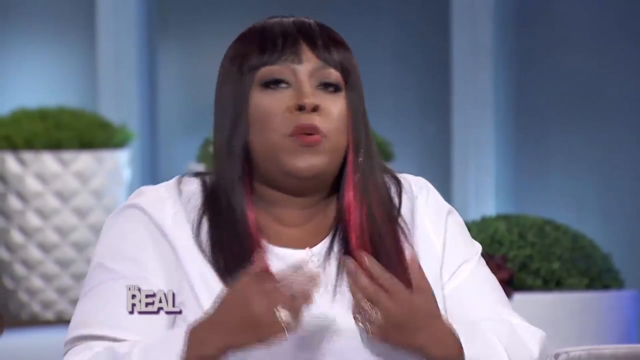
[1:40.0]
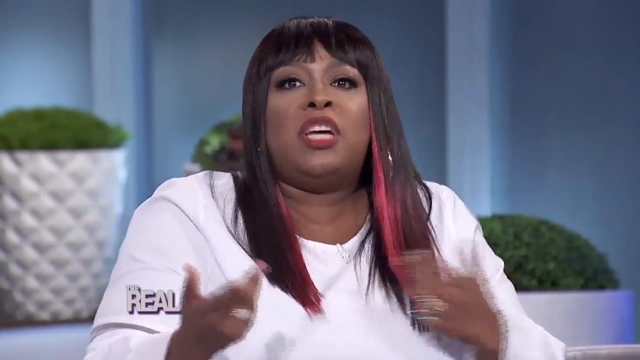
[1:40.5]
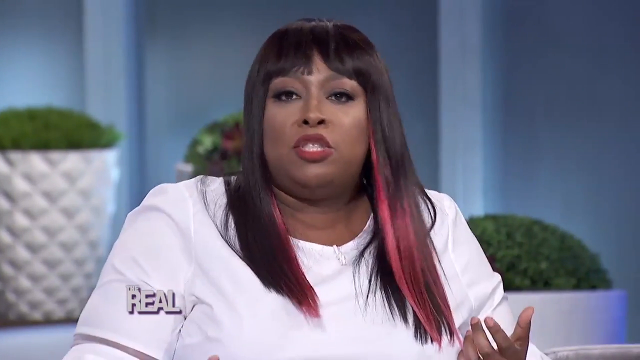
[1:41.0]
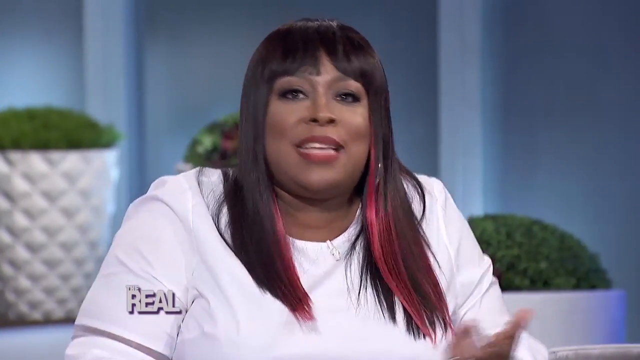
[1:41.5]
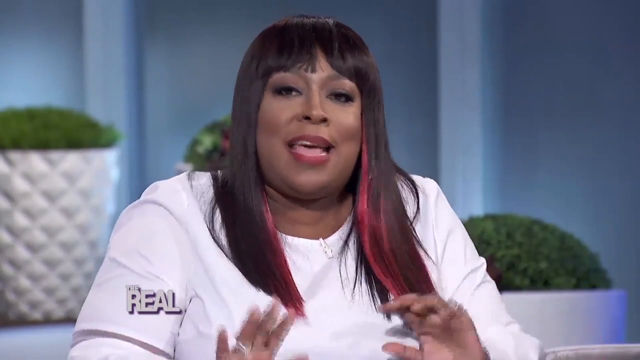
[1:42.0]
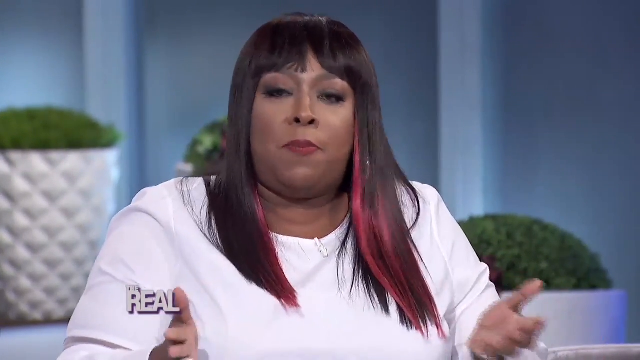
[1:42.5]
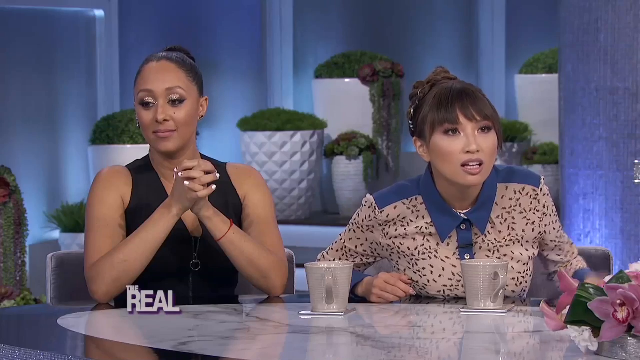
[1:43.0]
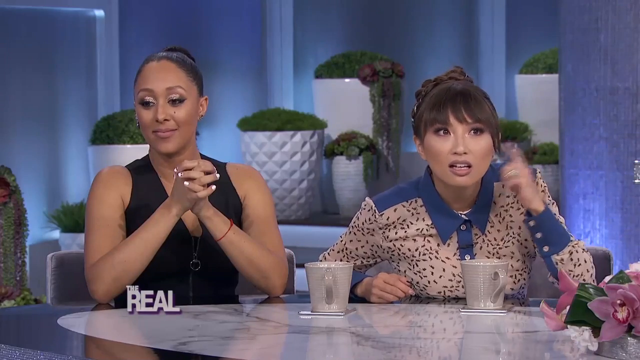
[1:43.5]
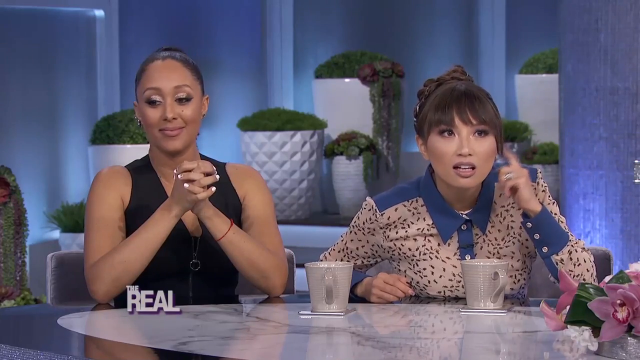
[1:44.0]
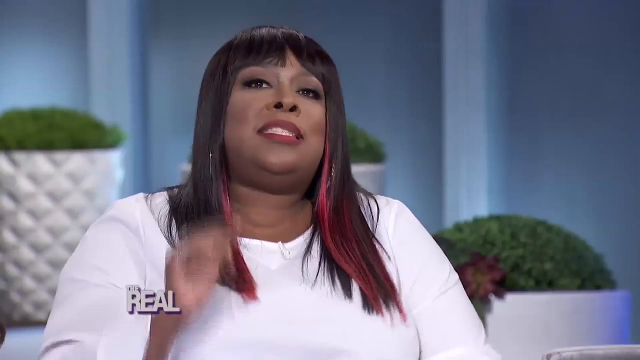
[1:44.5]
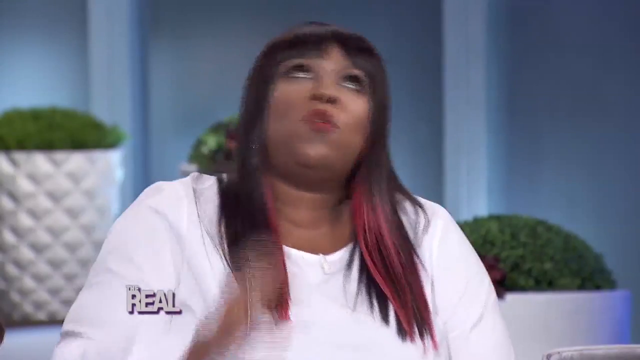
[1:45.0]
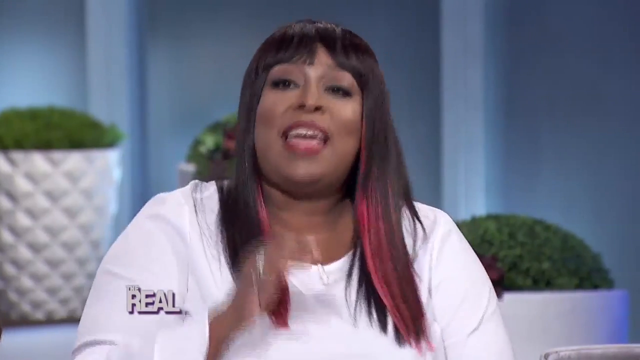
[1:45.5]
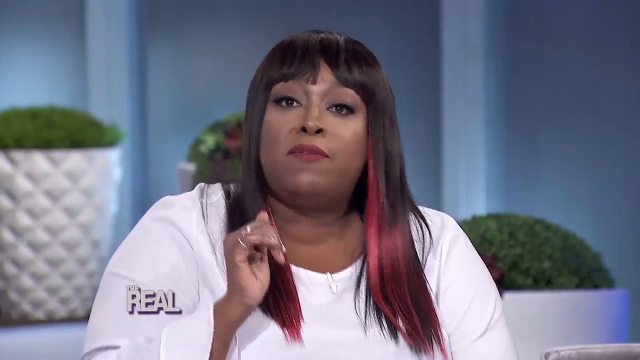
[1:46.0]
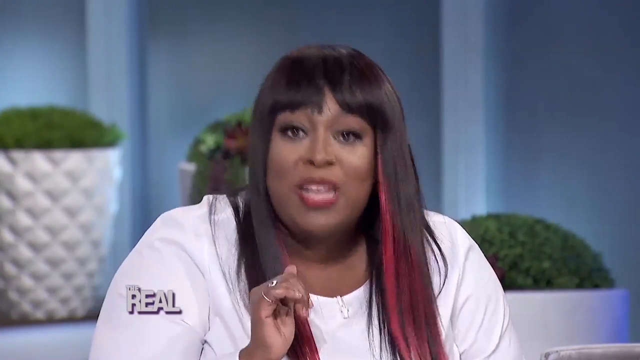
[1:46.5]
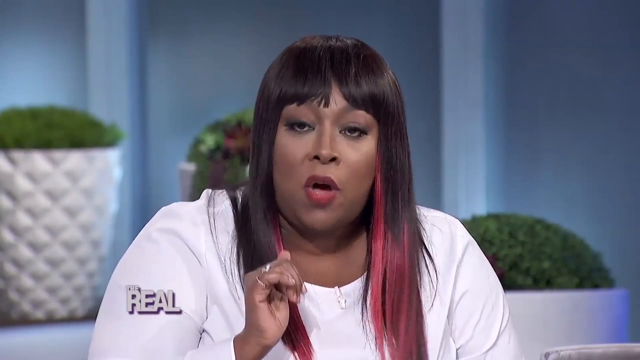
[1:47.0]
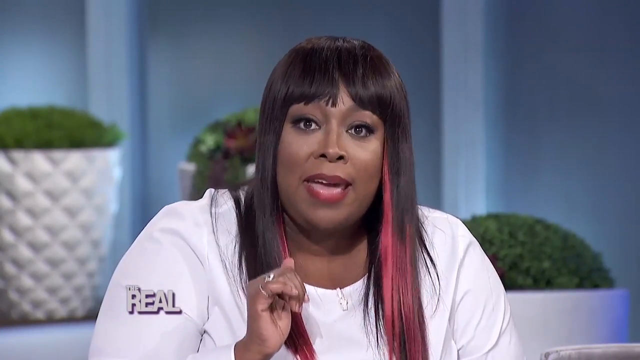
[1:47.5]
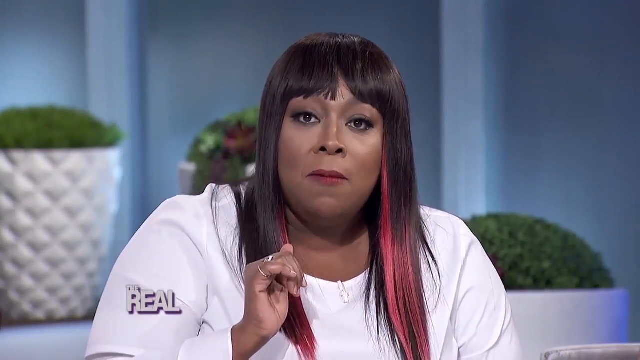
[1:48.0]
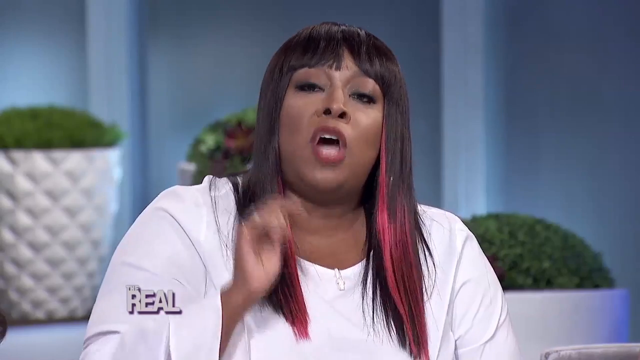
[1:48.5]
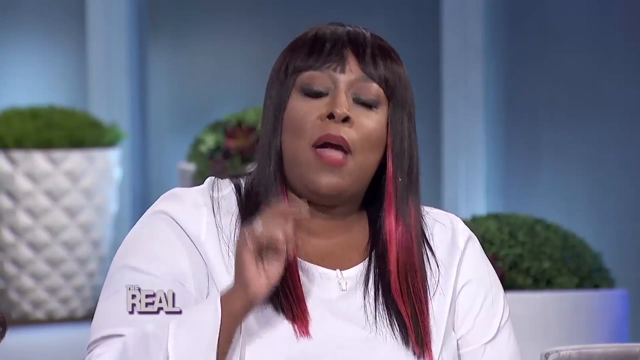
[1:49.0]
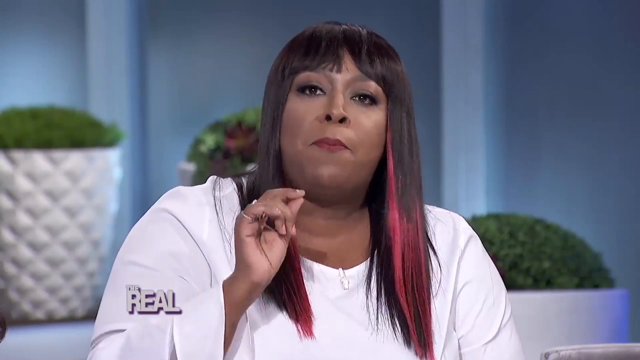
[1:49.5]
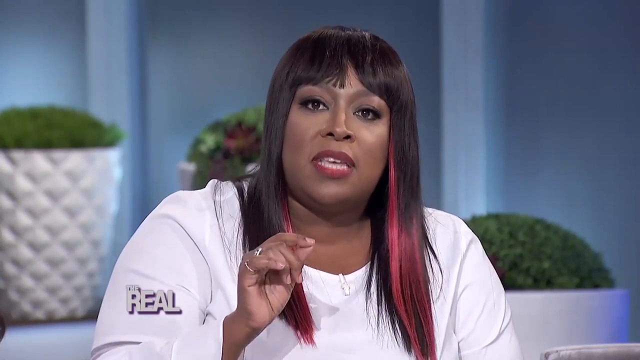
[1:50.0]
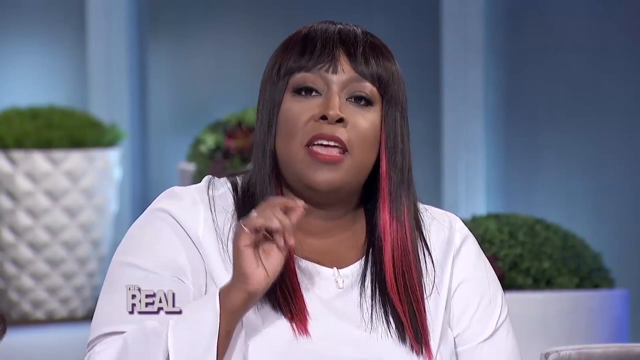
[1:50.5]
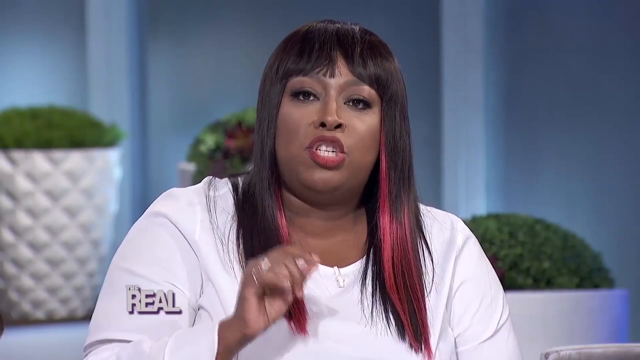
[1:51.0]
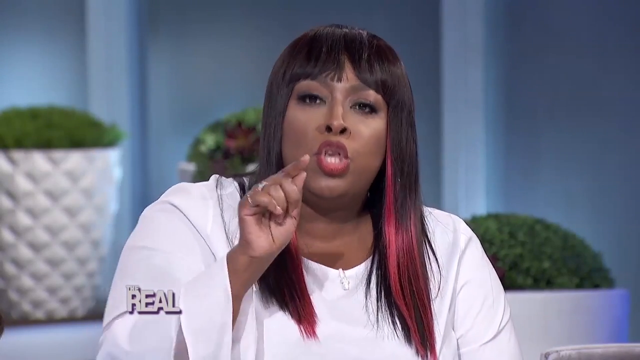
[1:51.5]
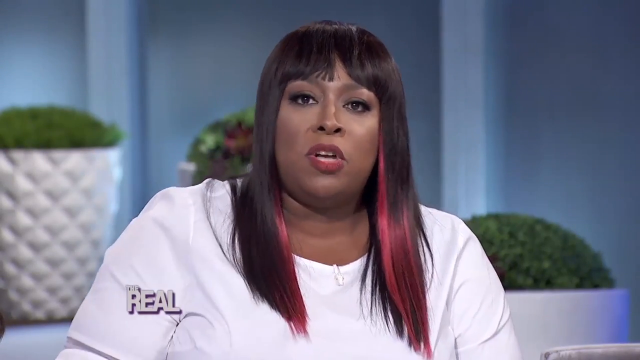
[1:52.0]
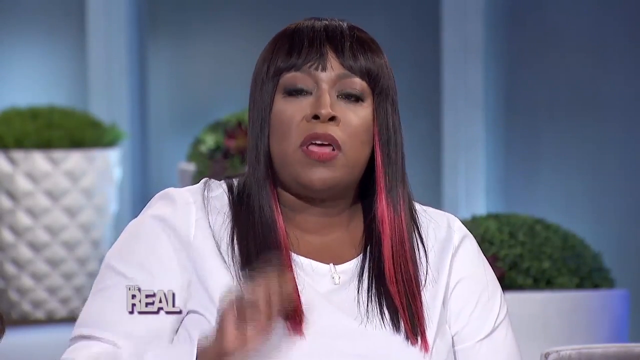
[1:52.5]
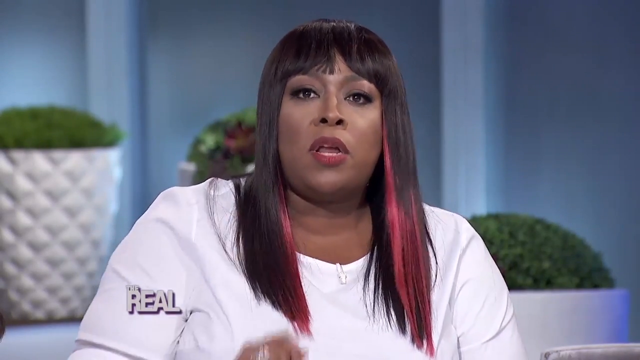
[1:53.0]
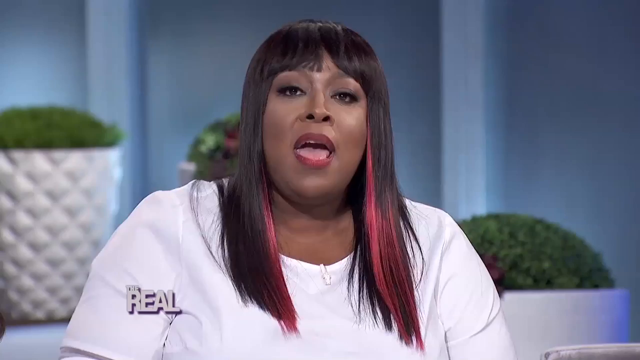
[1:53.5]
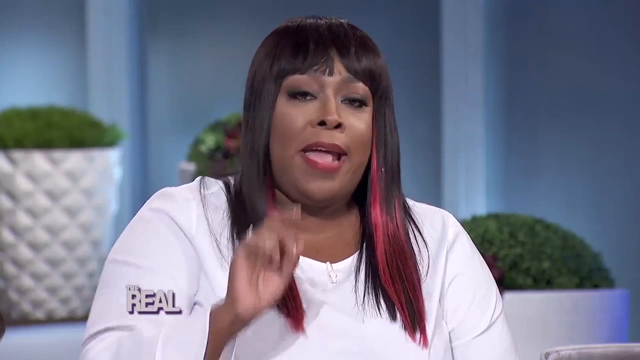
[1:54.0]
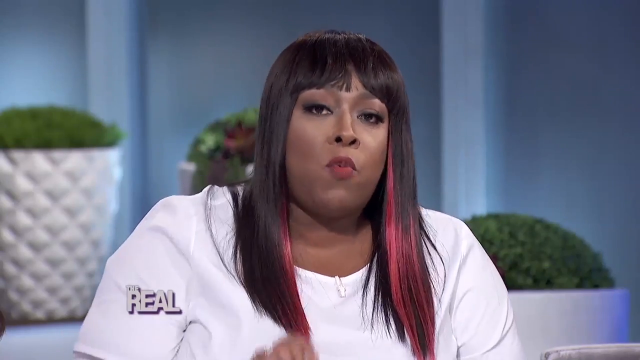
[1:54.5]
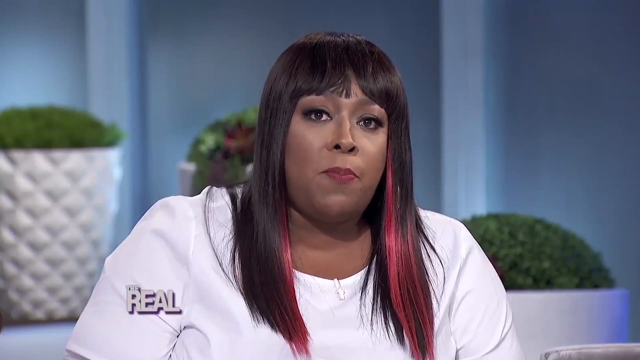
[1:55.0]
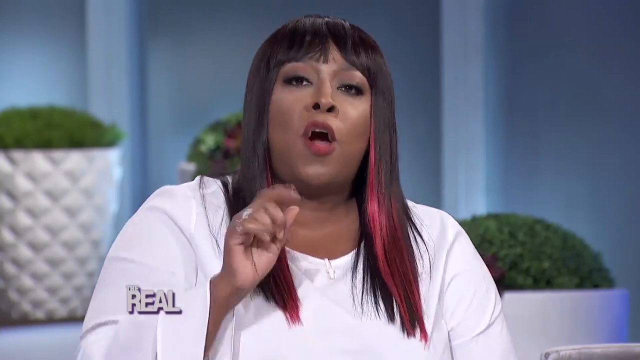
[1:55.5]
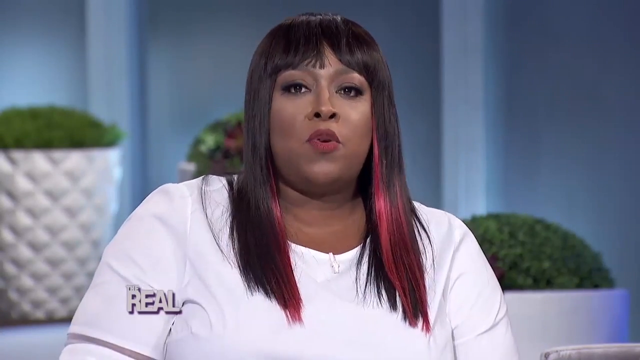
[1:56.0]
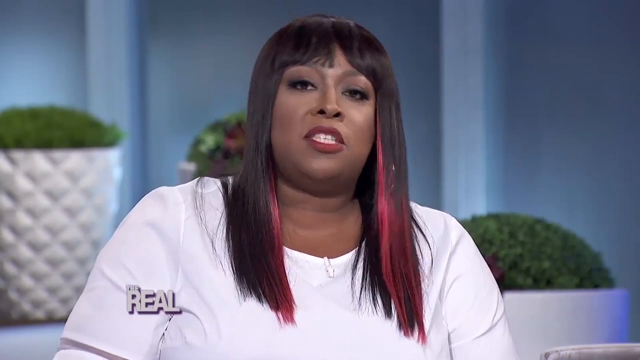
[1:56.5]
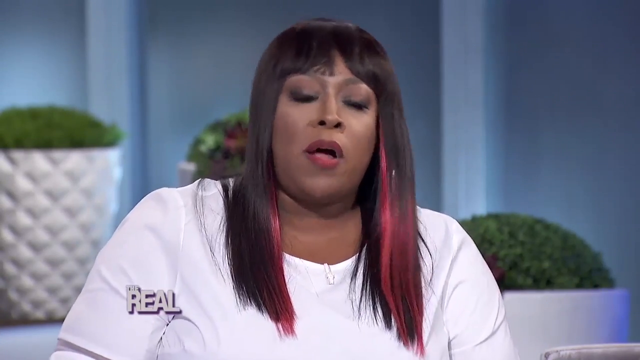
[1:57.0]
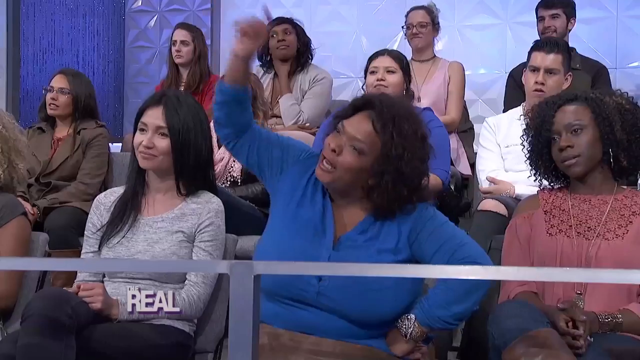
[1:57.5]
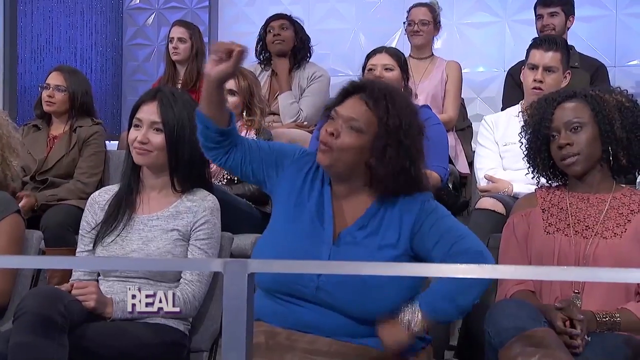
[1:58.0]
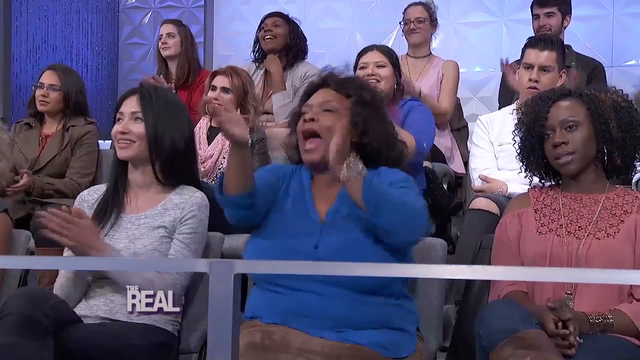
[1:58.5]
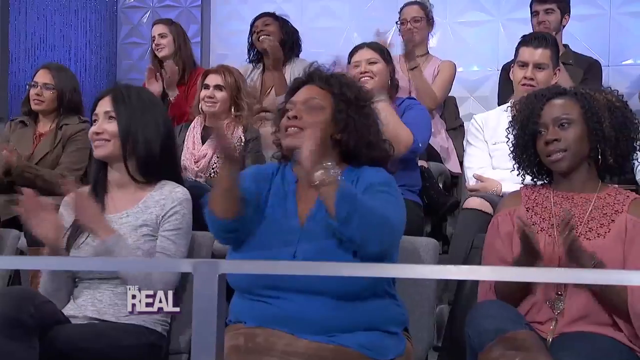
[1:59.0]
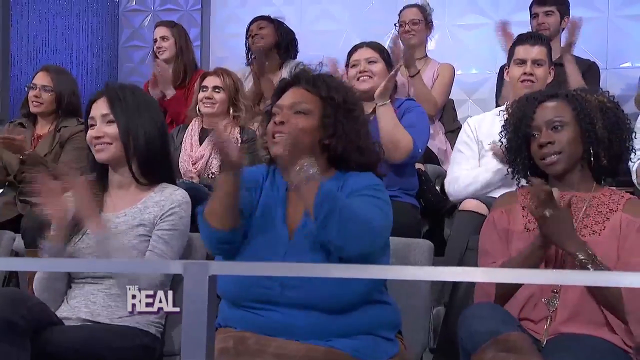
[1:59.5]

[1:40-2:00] The woman with straight black hair and pink highlights speaks directly to the camera, her hands kind of moving animatedly. She appears to have a serious expression and is perhaps almost annoyed, as she seems to speak quickly. Her shoulders shrug a little, almost as if she is saying "what is this?" in a kind of sassy way. Two other women are then shown instead: the woman with the braided ponytail and the woman with the bun and bangs. The woman with the bun and bangs has an incredulous look; with her left hand she kind of makes a pointing gesture and kind of taps her ear, with a very kind of almost annoyed expression. It goes back to the woman with straight black hair and pink highlights, who speaks animatedly, her head moving a lot, with a bit of an annoyed expression. She has her right hand up in the frame and kind of uses it to emphasize certain points, sort of bringing it back and forward as if to punctuate something. She then points directly at the camera with a kind of hard expression, as if accusing someone of something, and points again and again, four times in all. The camera then shows the audience, with eleven people, who all start to clap.